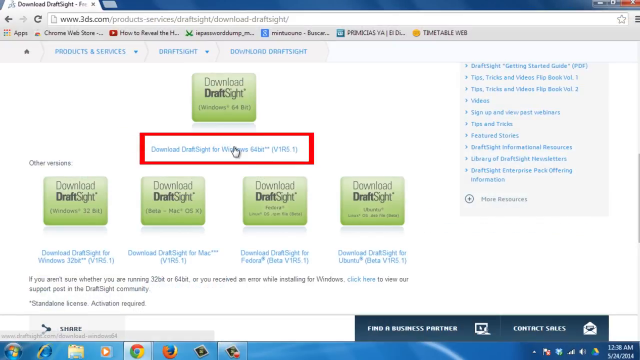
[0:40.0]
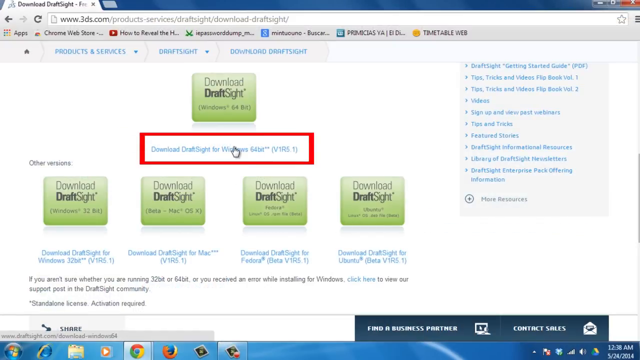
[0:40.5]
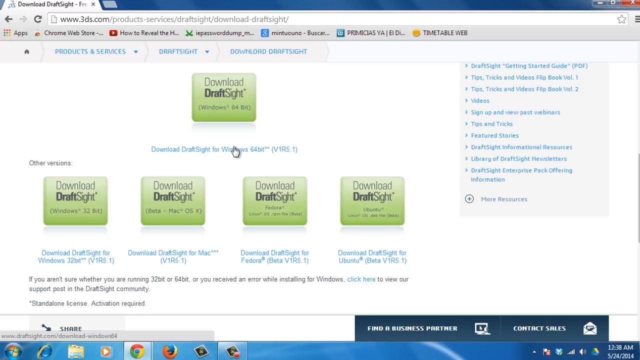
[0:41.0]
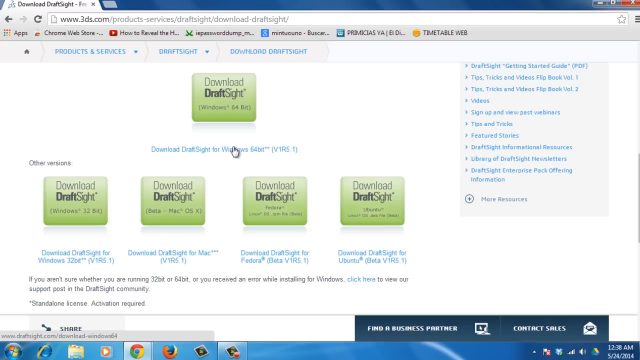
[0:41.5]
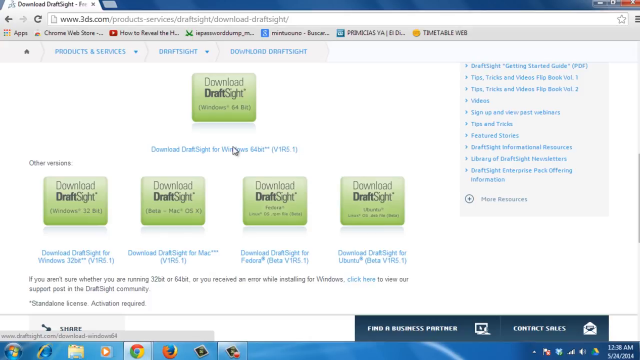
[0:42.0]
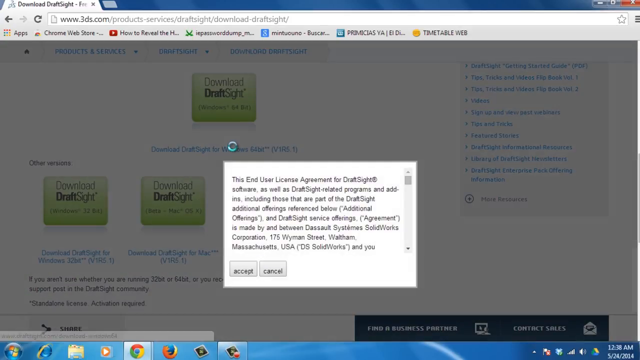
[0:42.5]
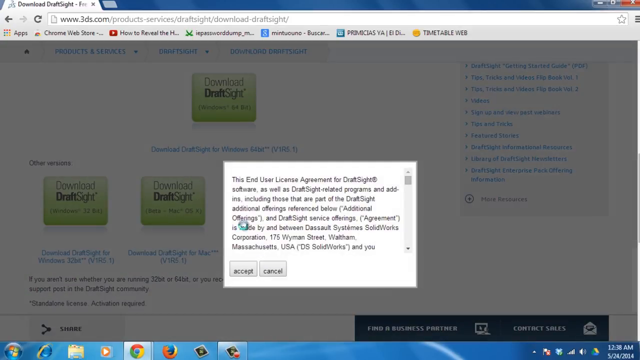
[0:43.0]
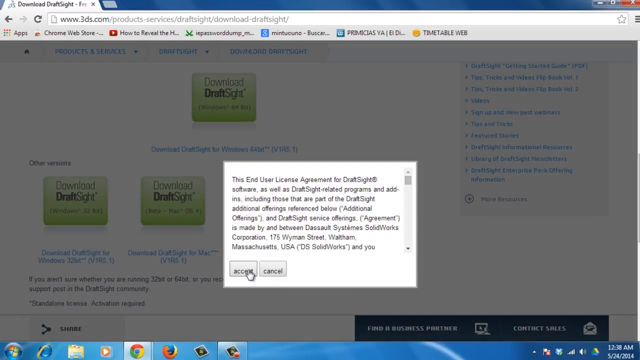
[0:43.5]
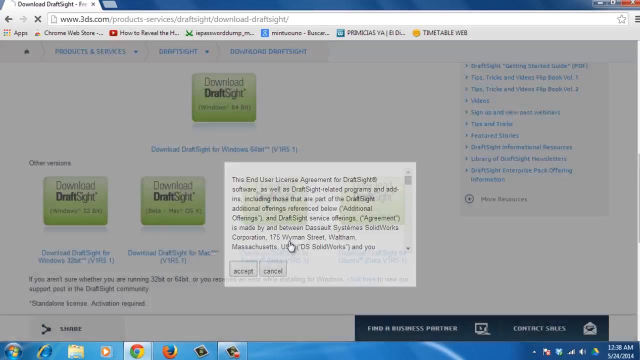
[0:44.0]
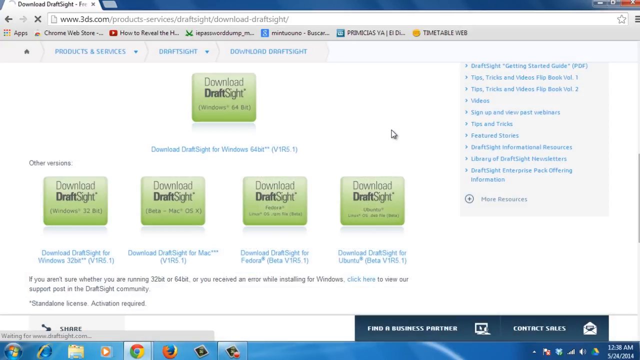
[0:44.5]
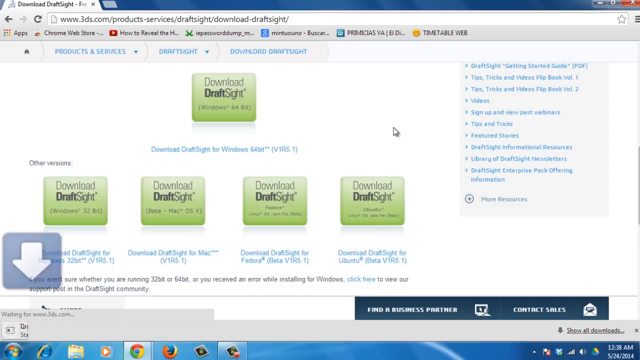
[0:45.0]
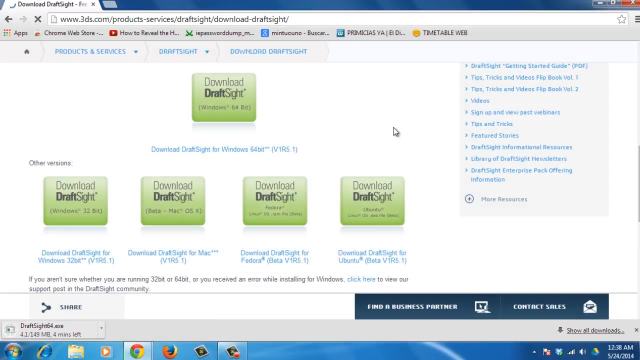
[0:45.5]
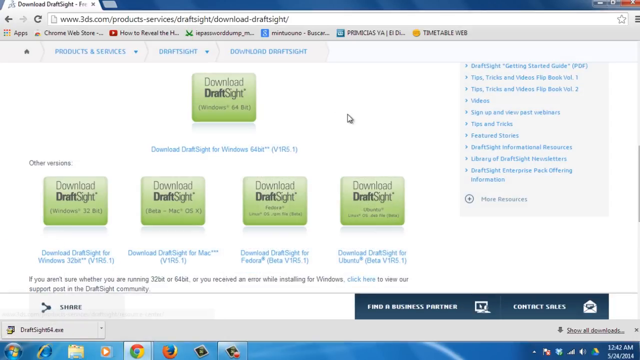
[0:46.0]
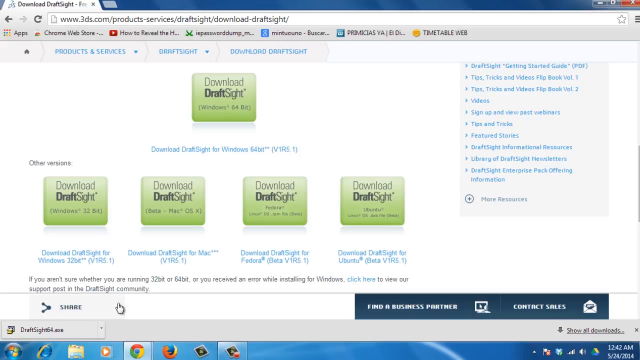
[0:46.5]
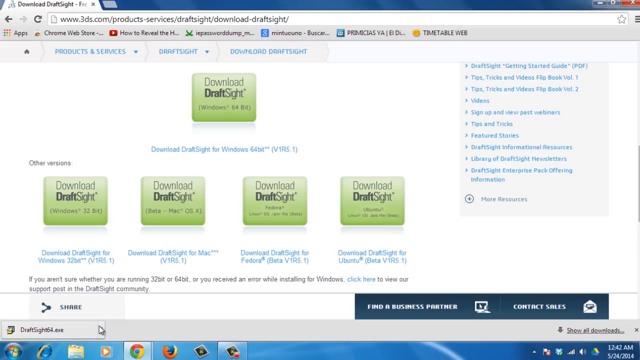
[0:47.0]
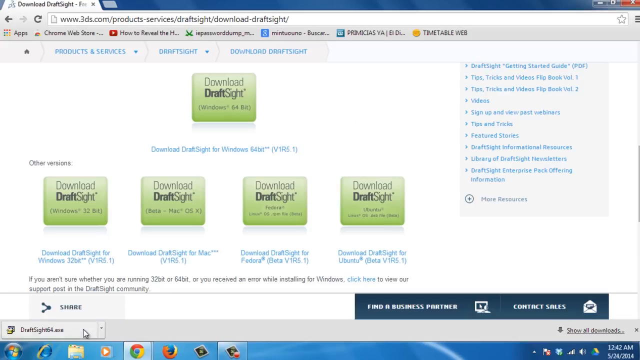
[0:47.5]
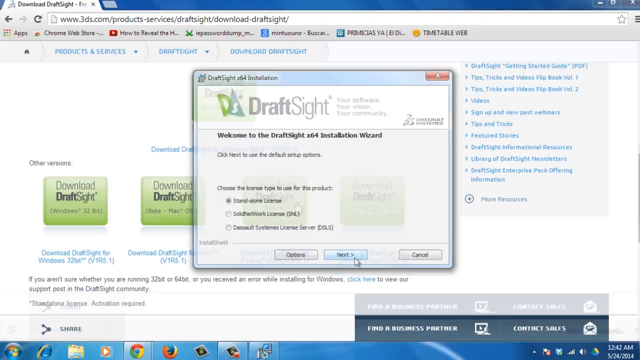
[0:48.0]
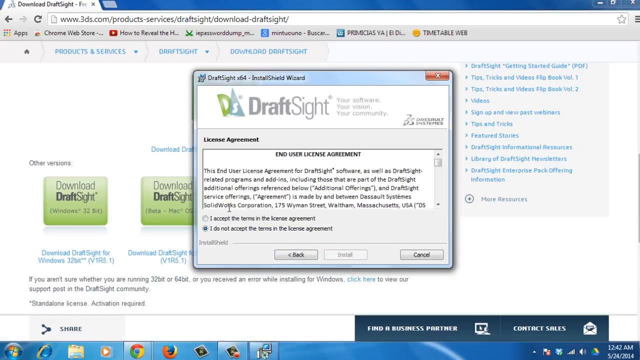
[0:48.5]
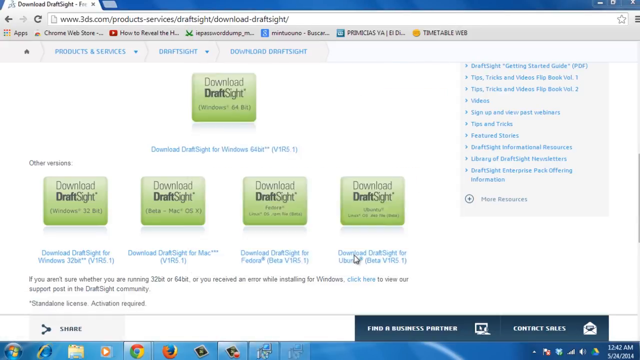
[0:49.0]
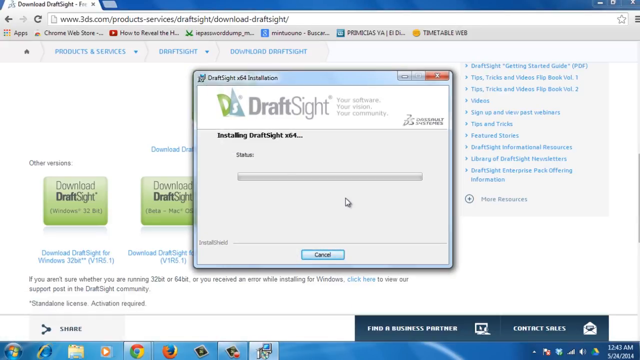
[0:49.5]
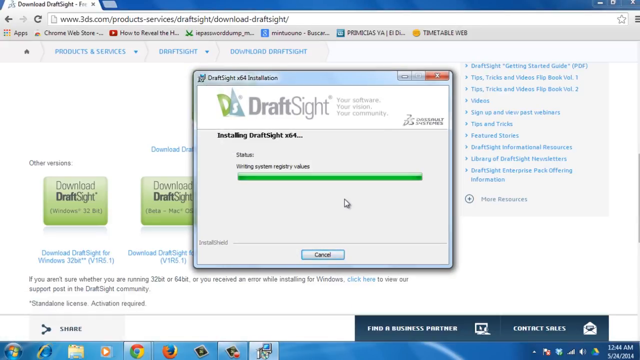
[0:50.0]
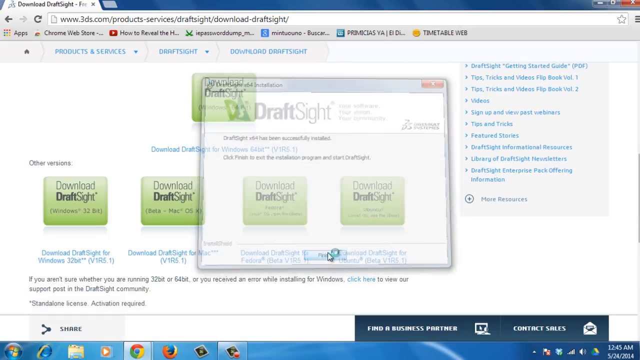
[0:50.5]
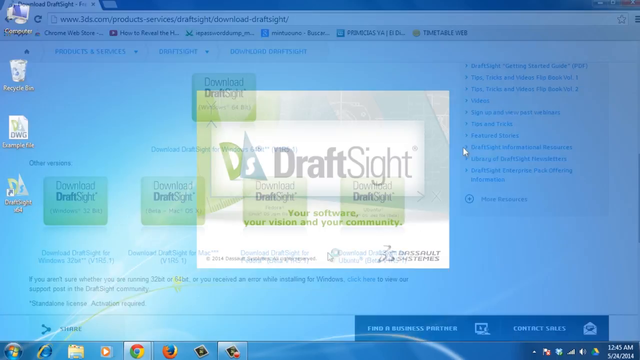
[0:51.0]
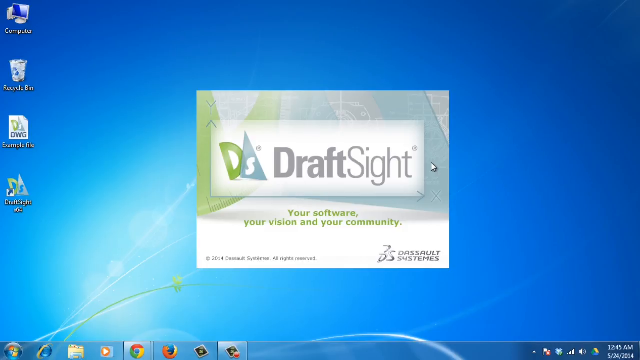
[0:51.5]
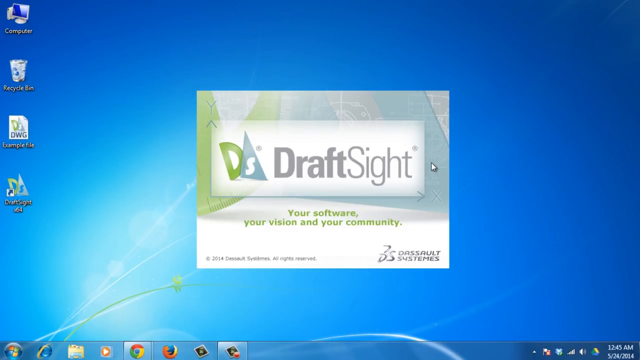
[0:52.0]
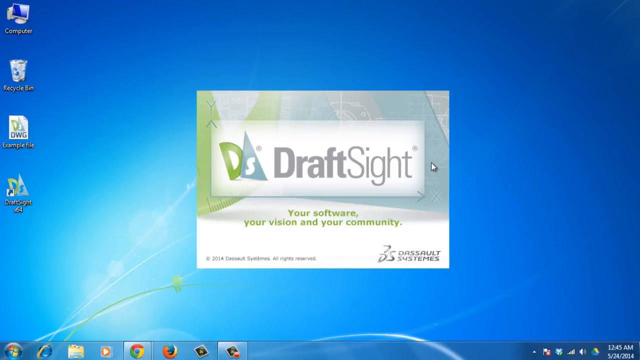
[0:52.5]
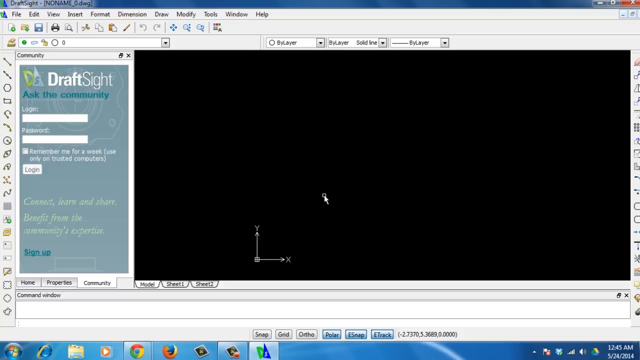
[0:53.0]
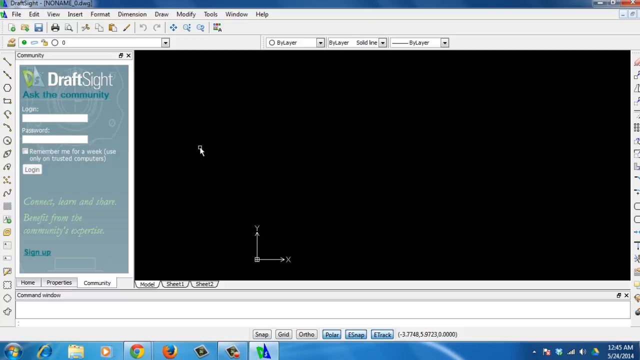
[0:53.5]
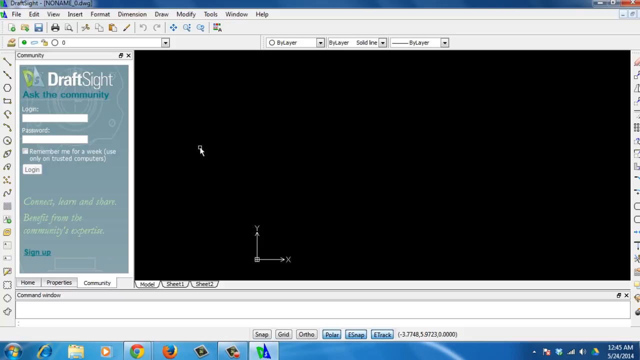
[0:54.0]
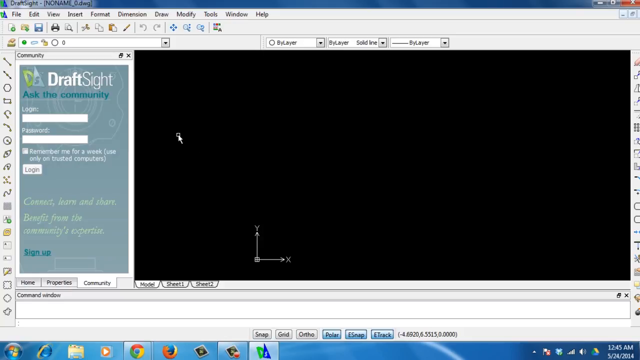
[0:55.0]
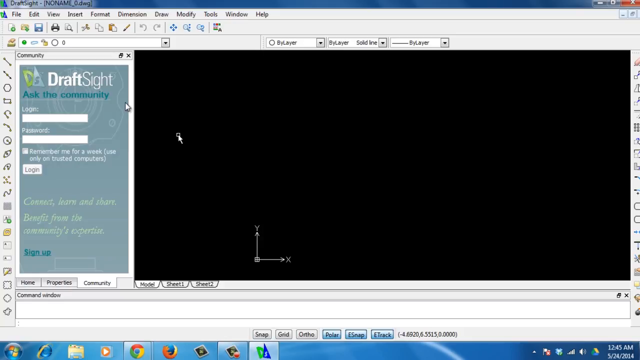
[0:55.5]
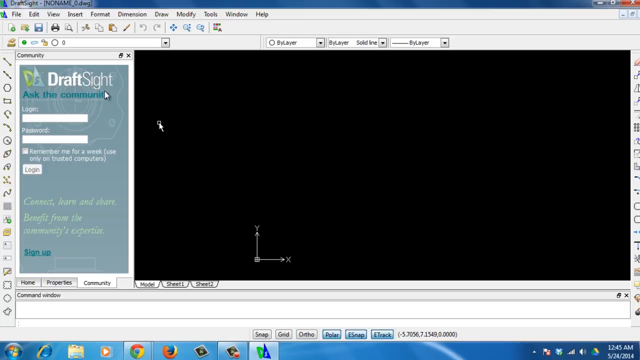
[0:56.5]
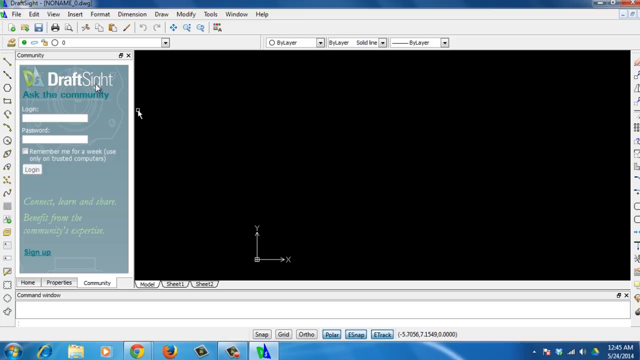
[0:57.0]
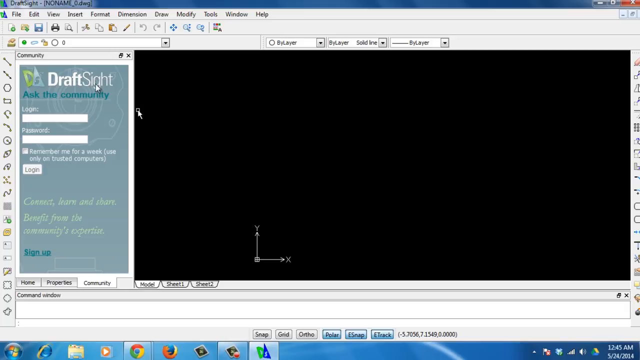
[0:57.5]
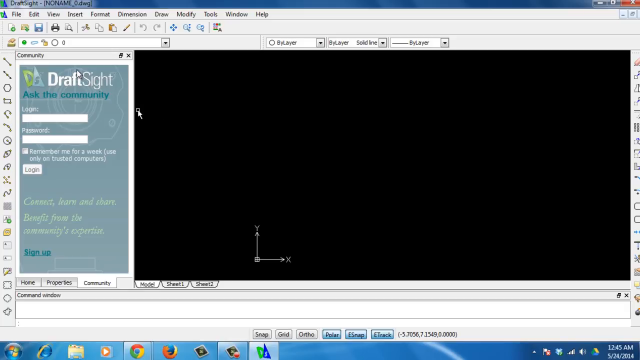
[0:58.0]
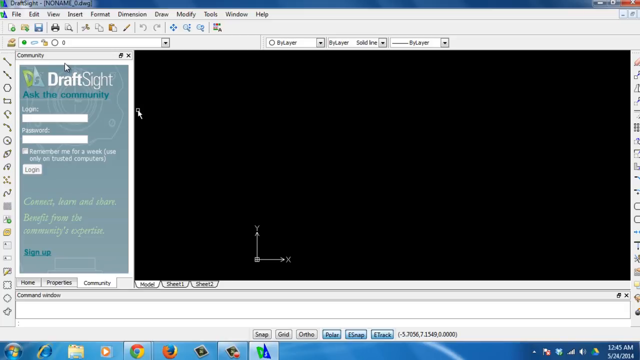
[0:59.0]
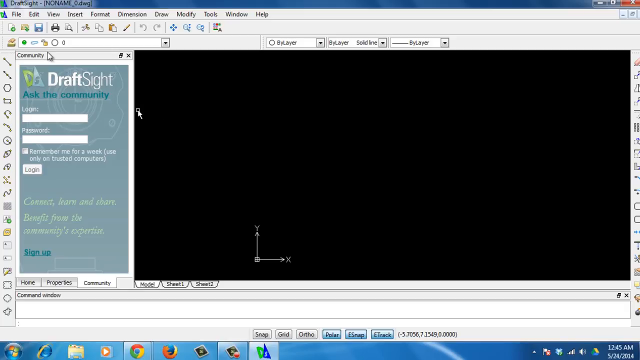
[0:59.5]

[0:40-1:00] After the download link is clicked, a pop-up window appears with the end user license agreement for DraftSight, with two buttons, accept and cancel. The user clicks accept and the download starts, visible at the bottom of the Google Chrome window. Once the download finishes, the user clicks the .exe file to install DraftSight. The end user license agreement pop-up appears again, this time with three buttons: back, install, and cancel. The user clicks install, and the installation finishes in seconds. A splash screen then appears reading "DraftSight, your software, your vision, and your community," with the license year 2014 in the bottom left corner and "Dassault Systems" in the bottom right corner. The DraftSight program then loads.